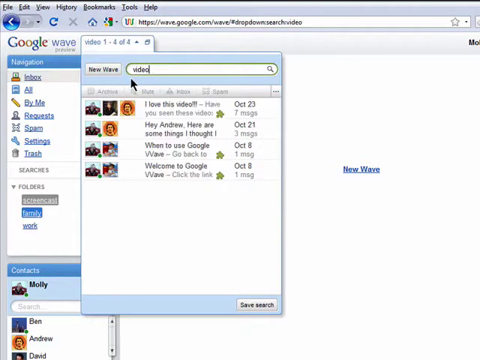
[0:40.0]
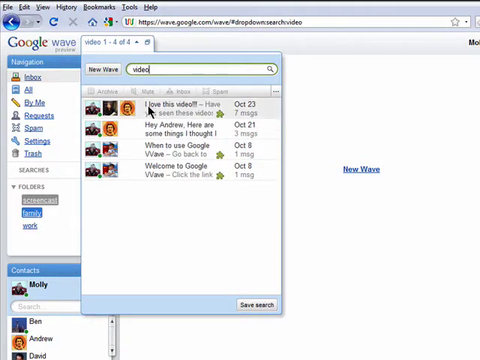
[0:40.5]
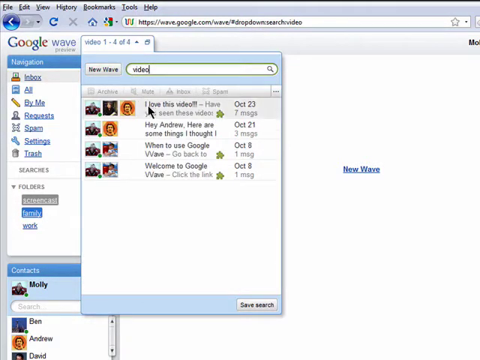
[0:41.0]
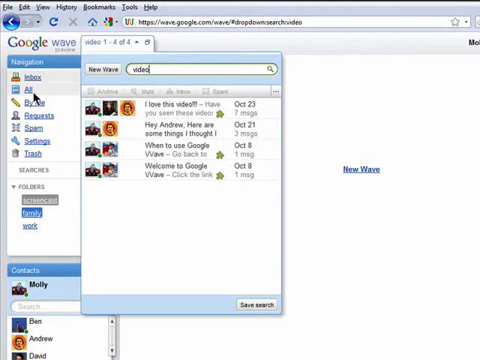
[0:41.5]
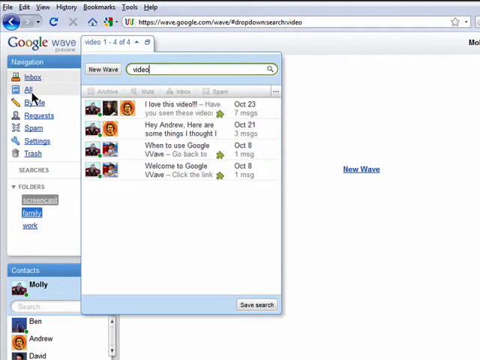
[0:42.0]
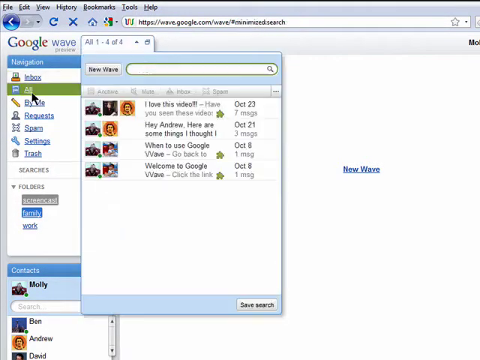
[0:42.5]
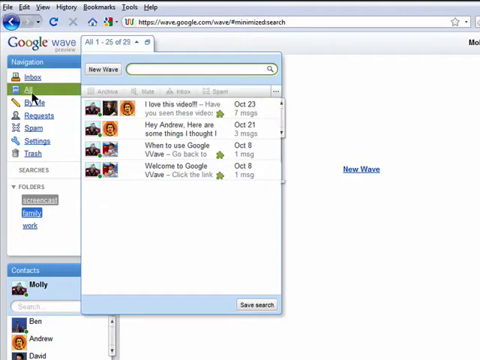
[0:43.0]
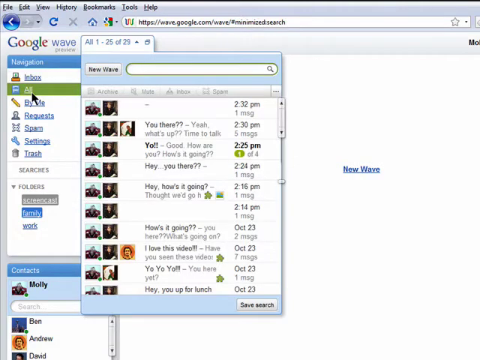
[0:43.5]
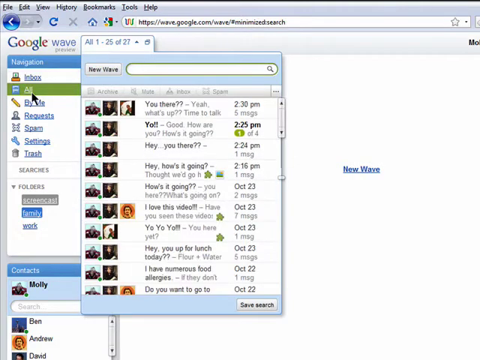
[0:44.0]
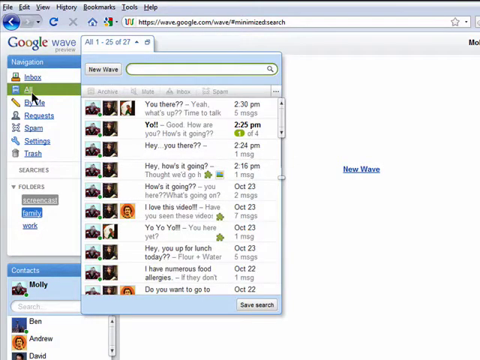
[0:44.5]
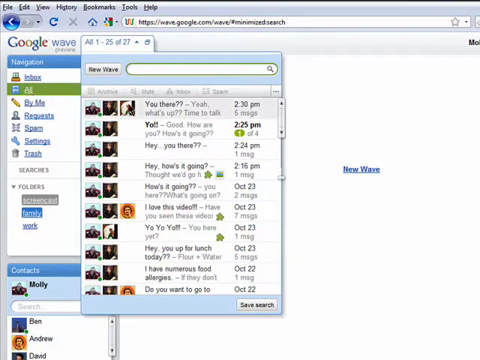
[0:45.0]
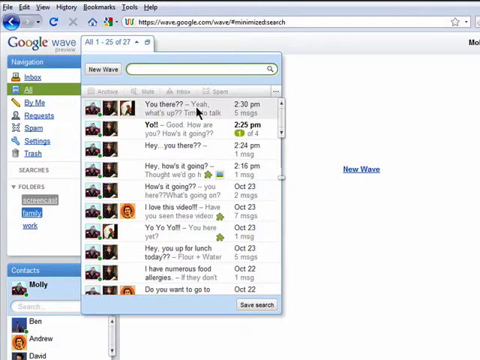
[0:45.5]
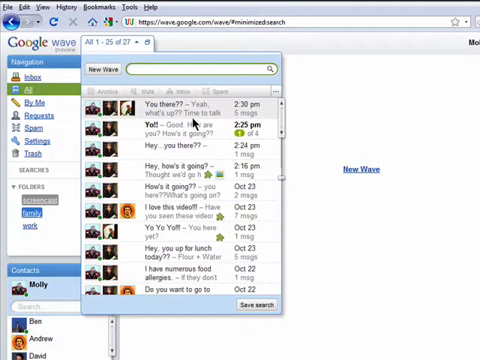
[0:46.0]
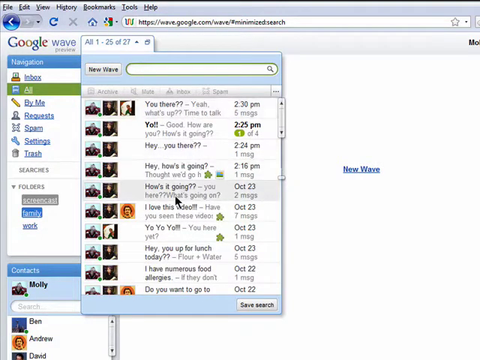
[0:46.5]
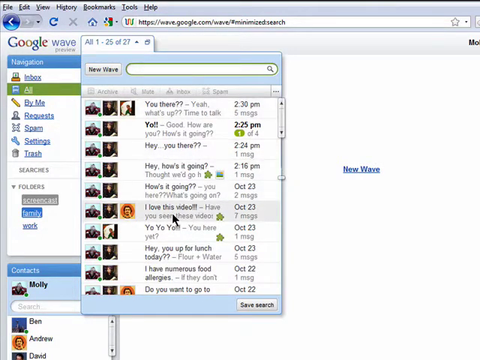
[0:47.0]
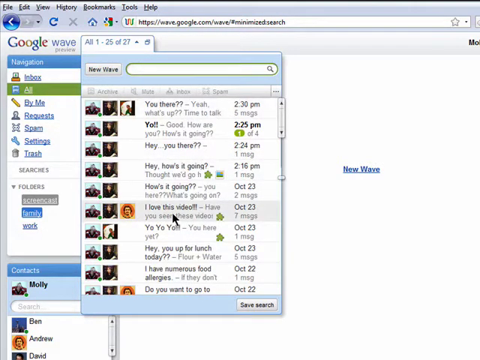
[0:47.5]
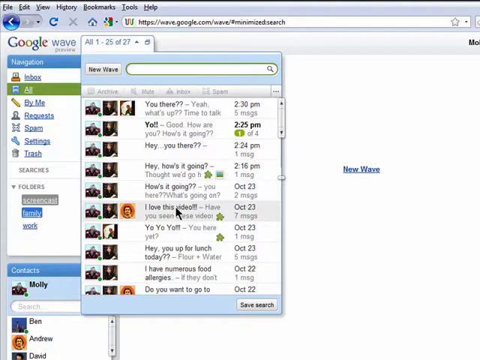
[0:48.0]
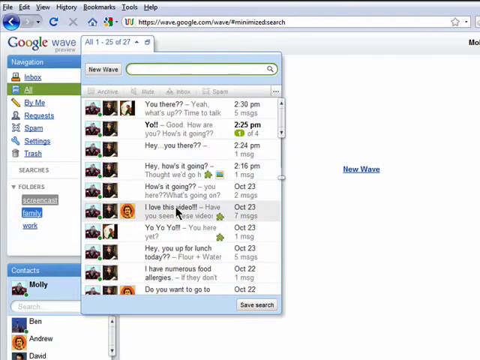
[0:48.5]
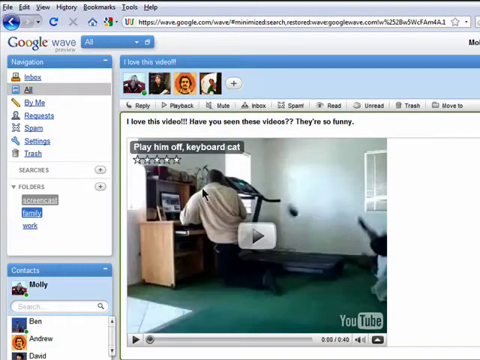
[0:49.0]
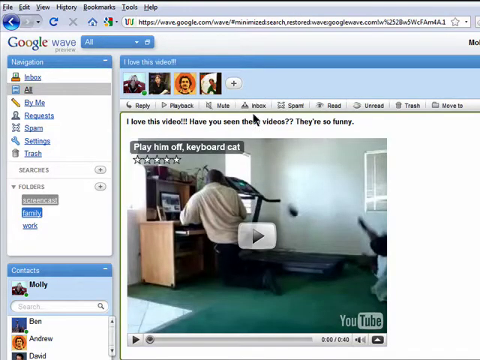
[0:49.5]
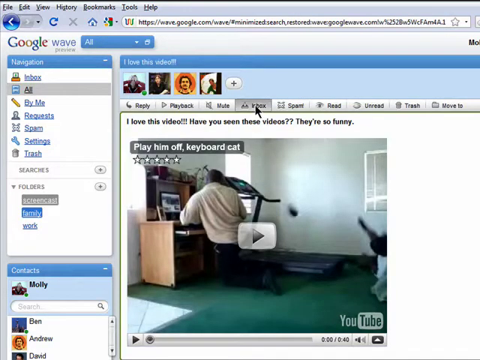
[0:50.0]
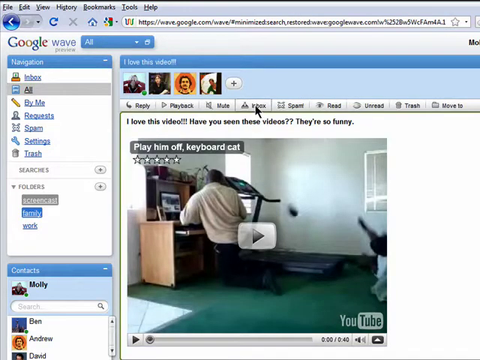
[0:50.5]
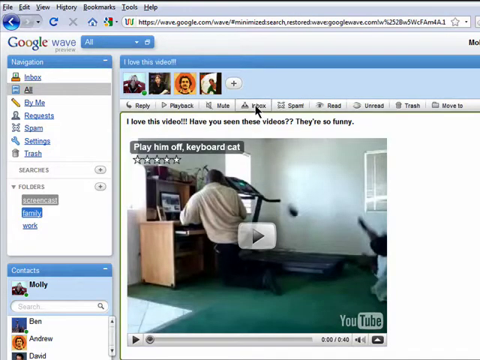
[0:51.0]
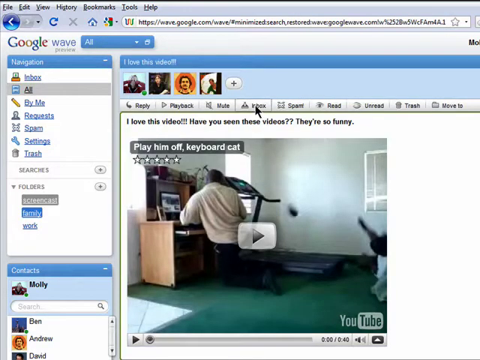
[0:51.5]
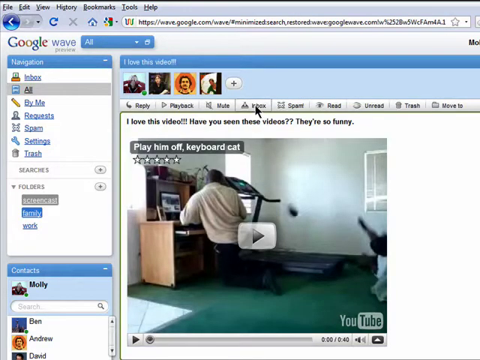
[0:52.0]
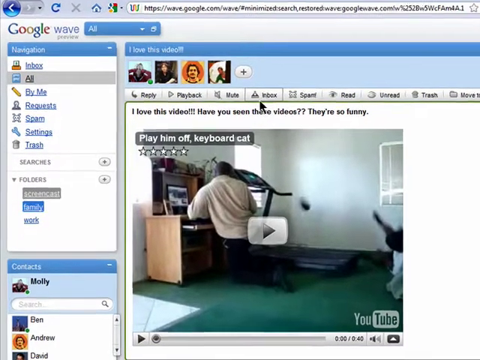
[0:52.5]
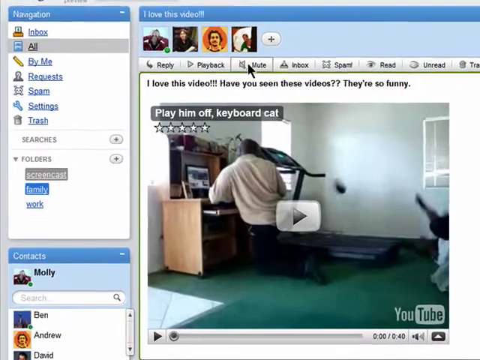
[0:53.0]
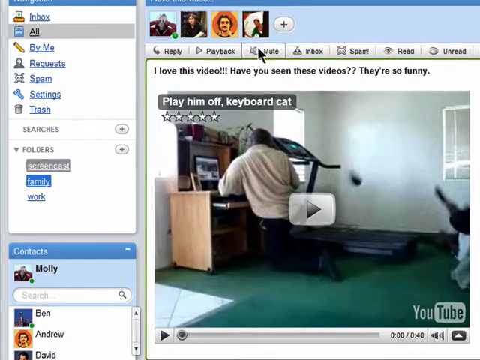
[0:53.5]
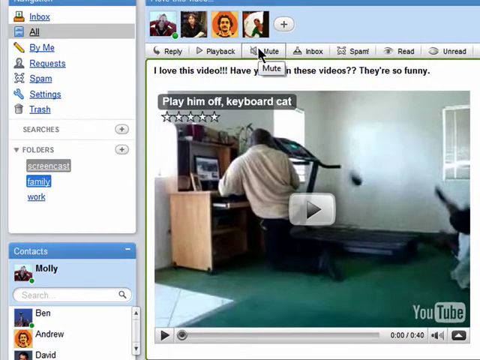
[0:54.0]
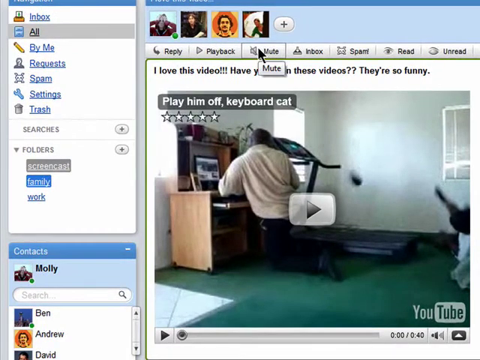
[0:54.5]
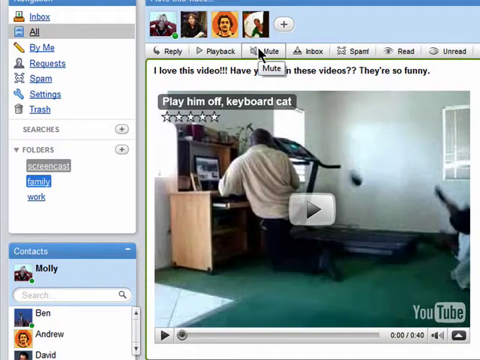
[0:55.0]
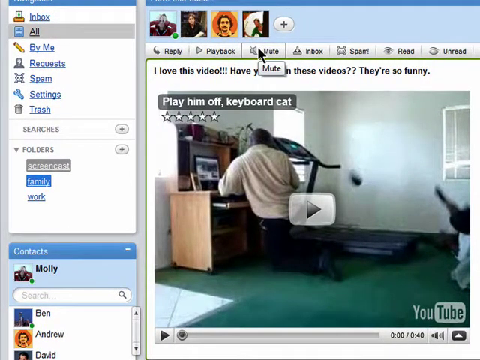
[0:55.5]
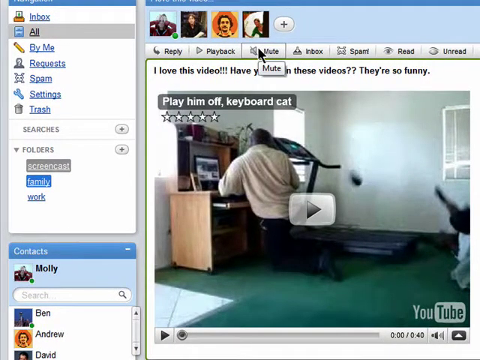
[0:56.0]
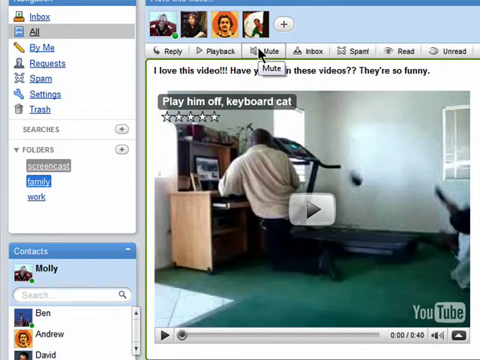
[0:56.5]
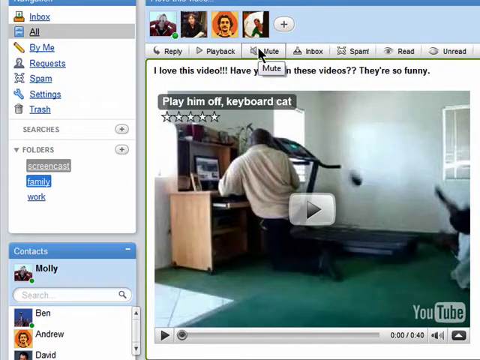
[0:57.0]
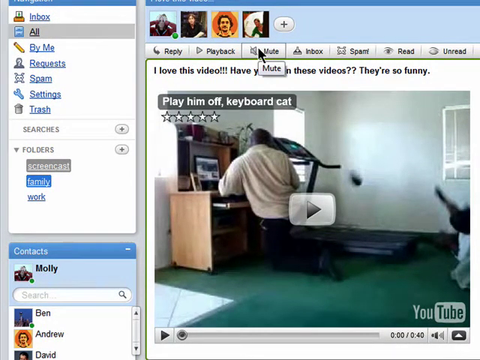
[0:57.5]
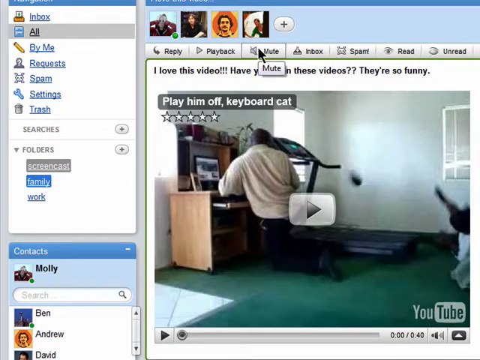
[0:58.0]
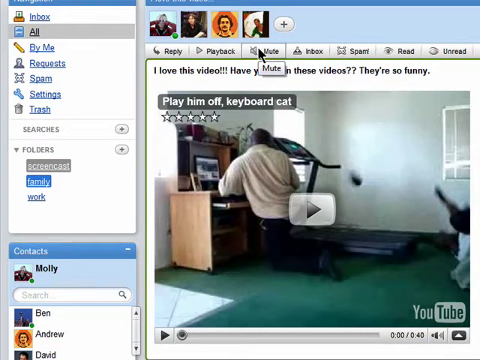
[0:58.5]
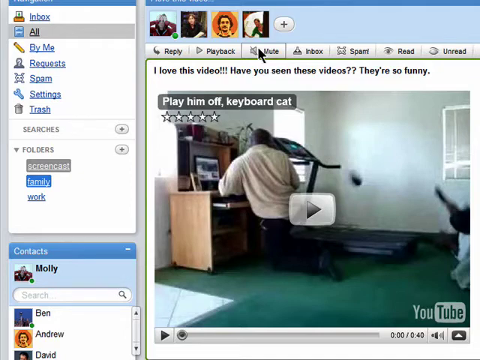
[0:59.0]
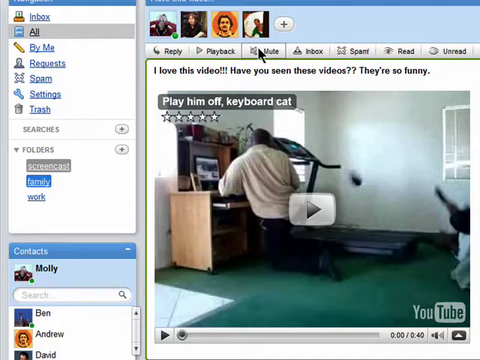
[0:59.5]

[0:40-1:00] After he types "video", four videos pop up. He scrolls down to the first video and looks like he is about to open it, but instead moves left and clicks "all" under the navigation, which shows all the emails, quite a lot of them. A pop-up box at the top reads "all" and indicates 1 to 25 of 29. He clicks something and some of the entries change; one he clicks reads "you there", at 2:30 PM, with five messages back and forth. He then goes down about five emails to "I love this video" and returns to that video, where a guy in a white shirt is at a desk, kneeling down, on a carpet that looks almost like green fake grass. He clicks the inbox, moves to the left, and hovers over mute, and a little mute caption box pops up underneath it. The Google Wave page has a Google logo with a rainbow-looking element, and the hyperlinks are blue and underlined. On the left side of the navigation there are seven different links, then a search, then folders named screencast, family and work, and underneath those the different contacts in the group start to appear.